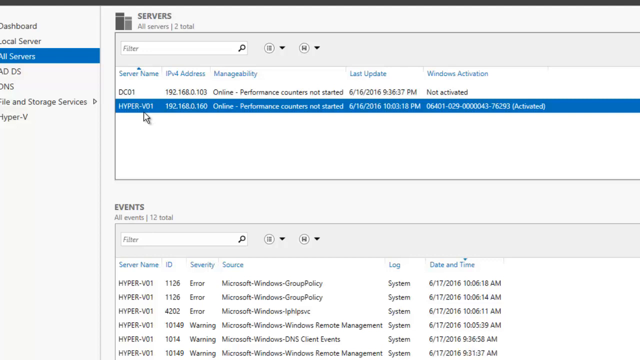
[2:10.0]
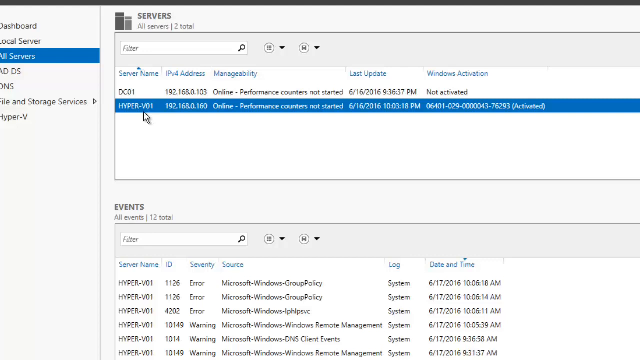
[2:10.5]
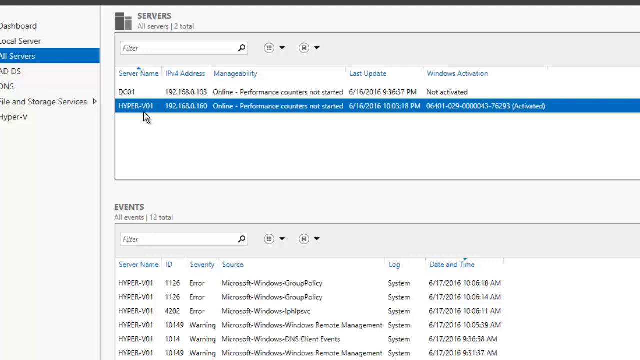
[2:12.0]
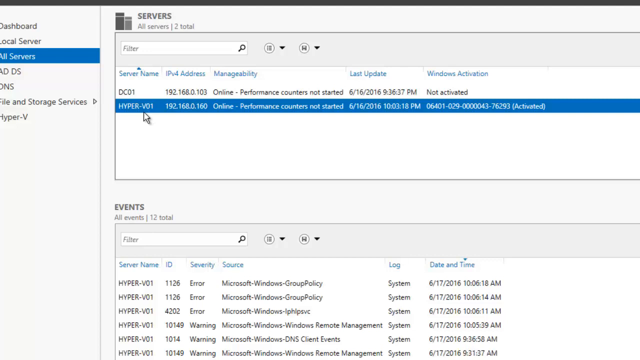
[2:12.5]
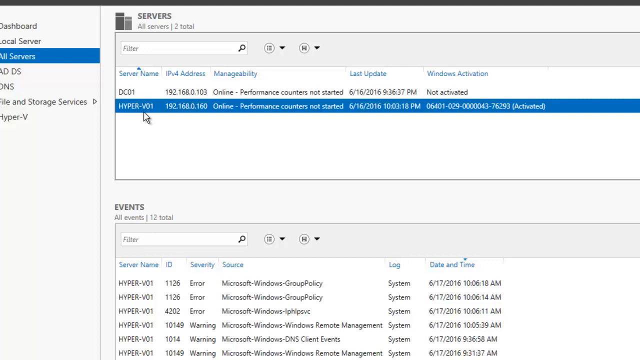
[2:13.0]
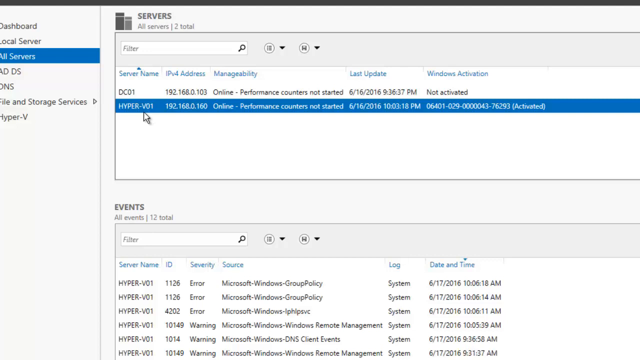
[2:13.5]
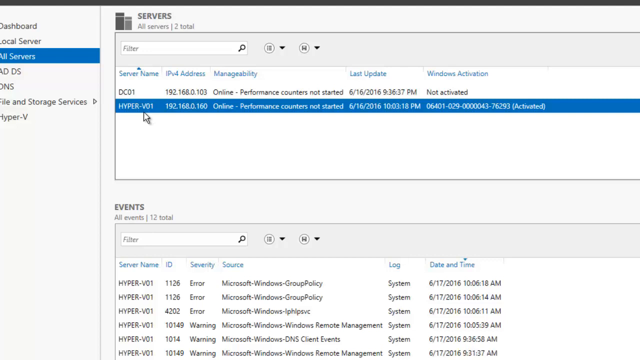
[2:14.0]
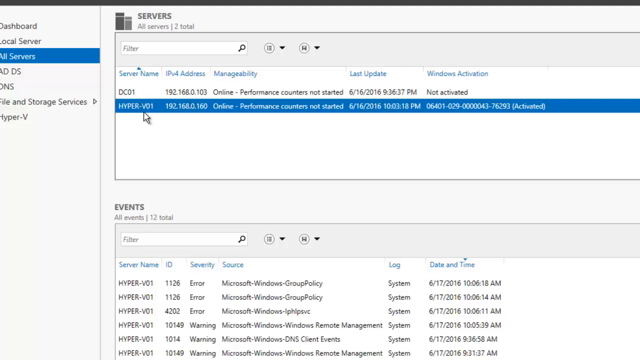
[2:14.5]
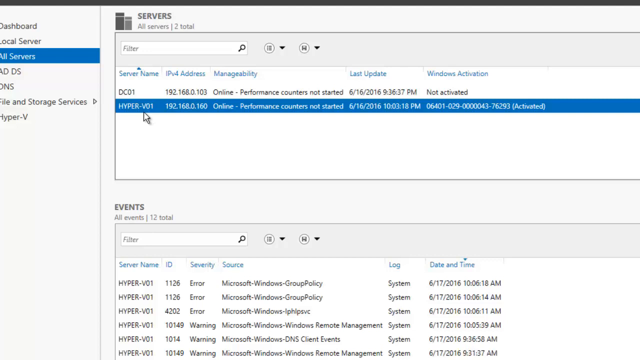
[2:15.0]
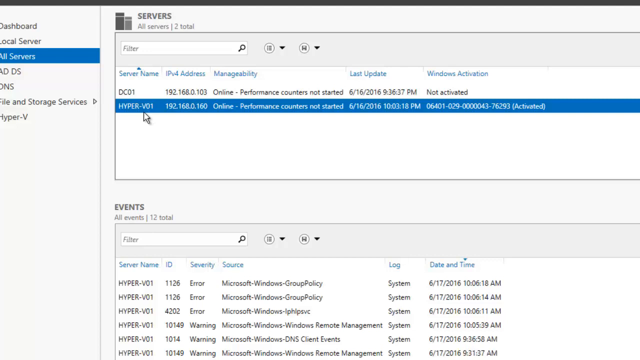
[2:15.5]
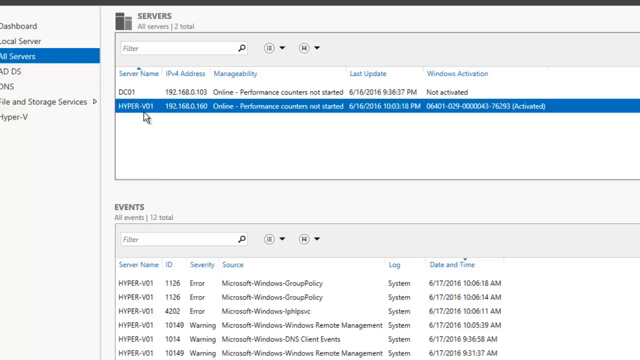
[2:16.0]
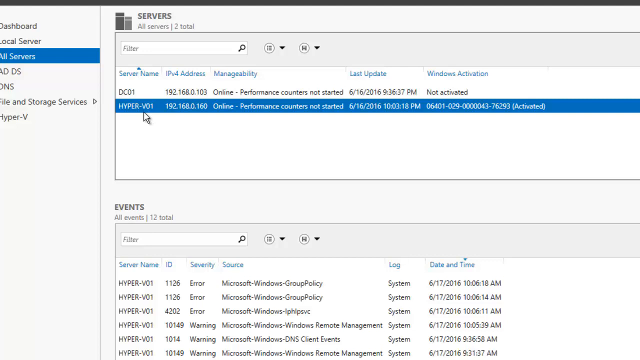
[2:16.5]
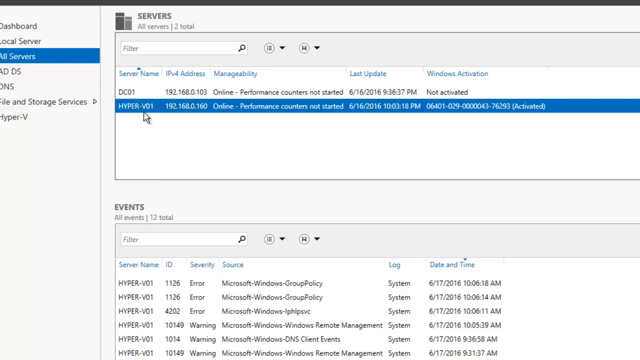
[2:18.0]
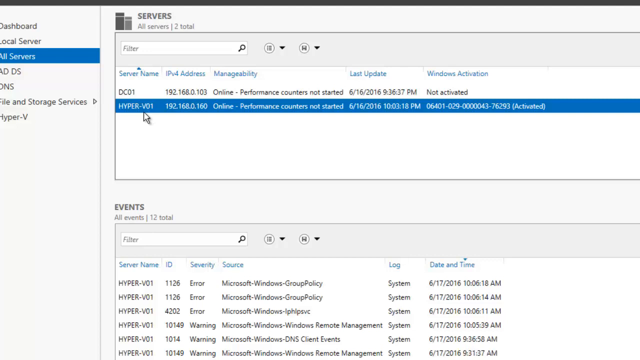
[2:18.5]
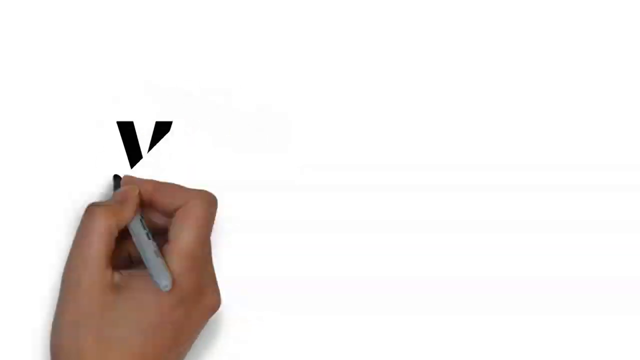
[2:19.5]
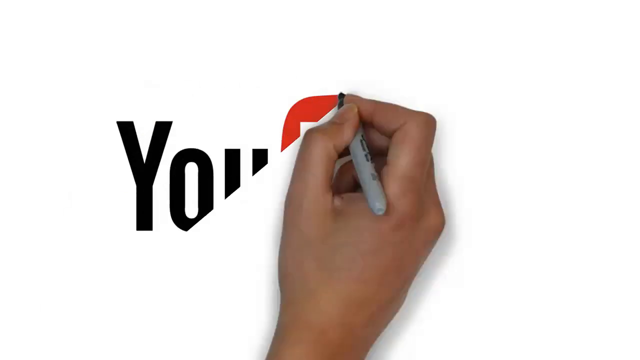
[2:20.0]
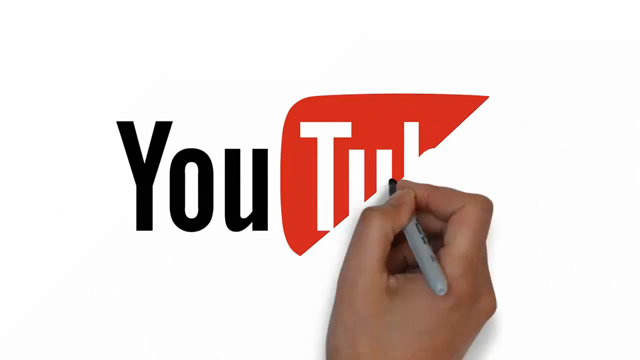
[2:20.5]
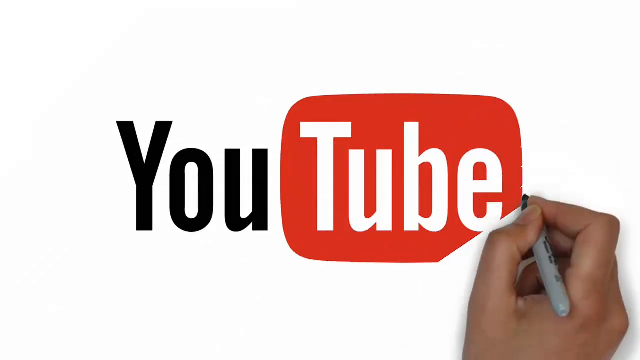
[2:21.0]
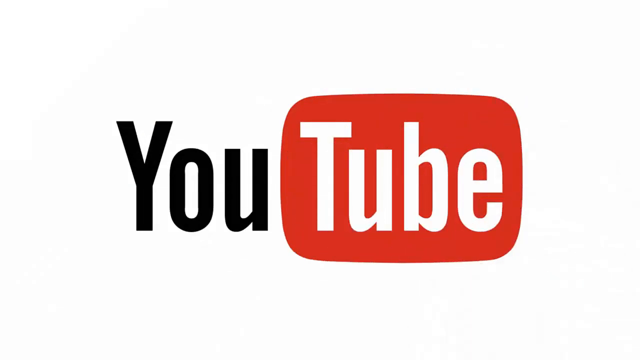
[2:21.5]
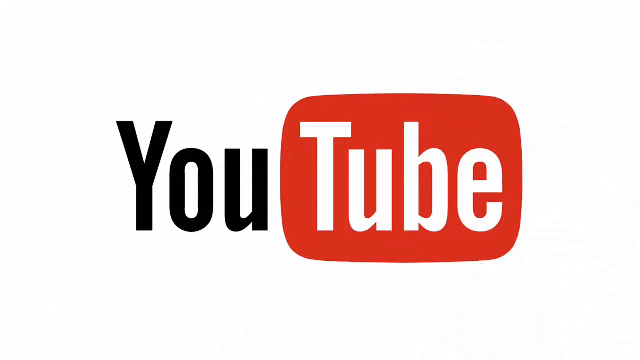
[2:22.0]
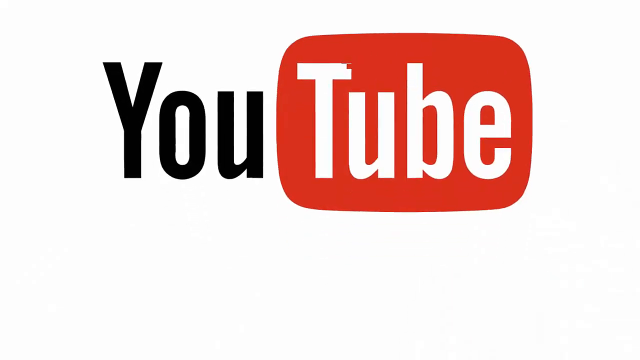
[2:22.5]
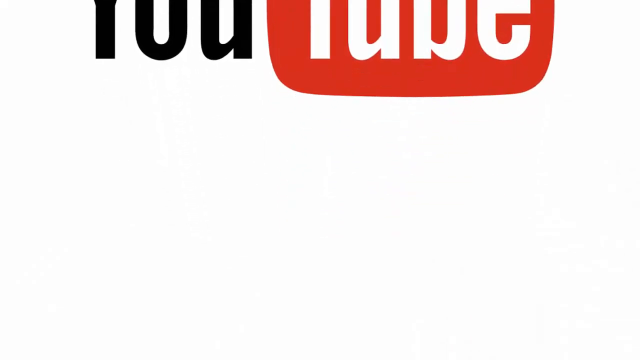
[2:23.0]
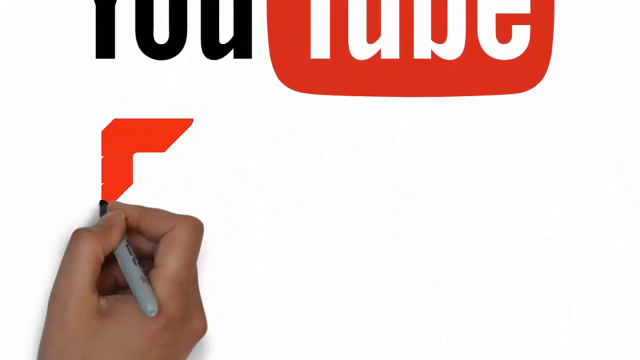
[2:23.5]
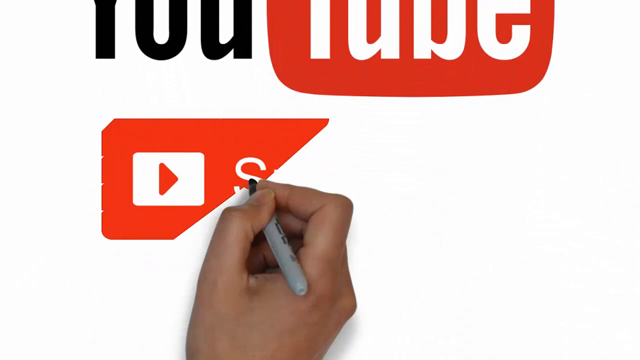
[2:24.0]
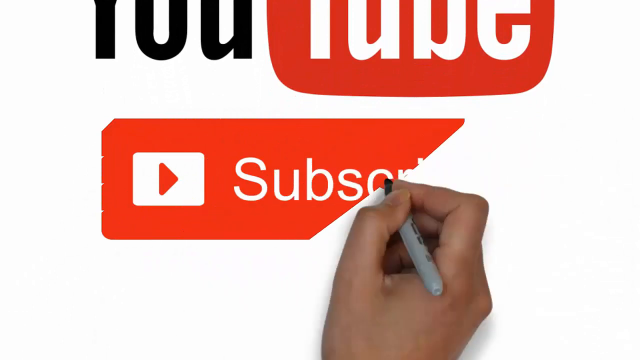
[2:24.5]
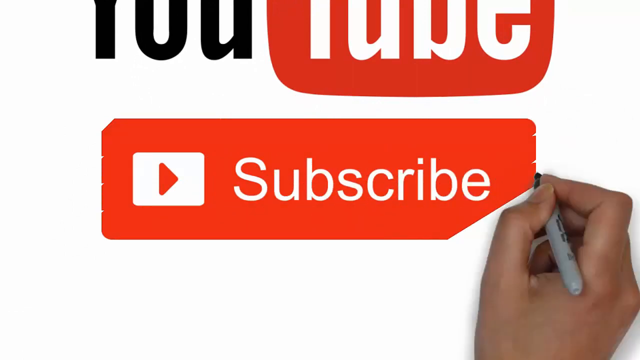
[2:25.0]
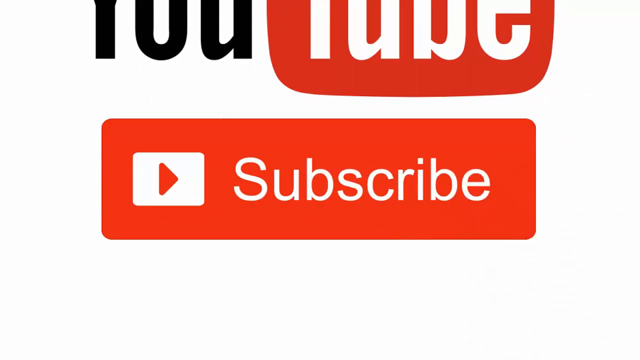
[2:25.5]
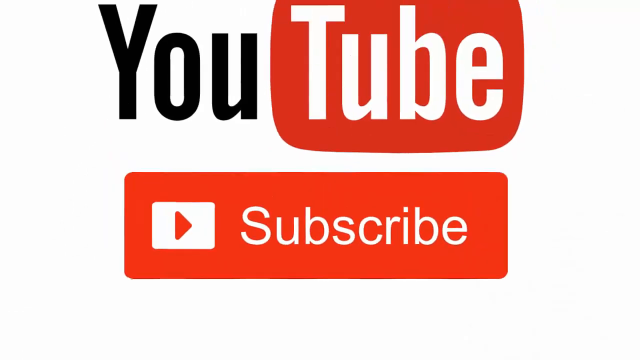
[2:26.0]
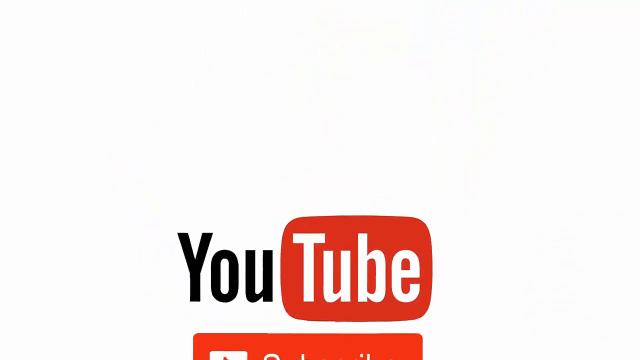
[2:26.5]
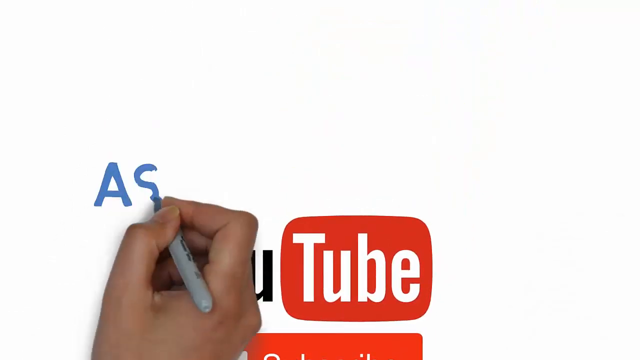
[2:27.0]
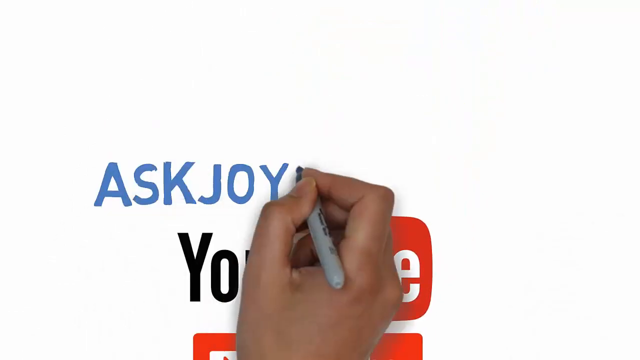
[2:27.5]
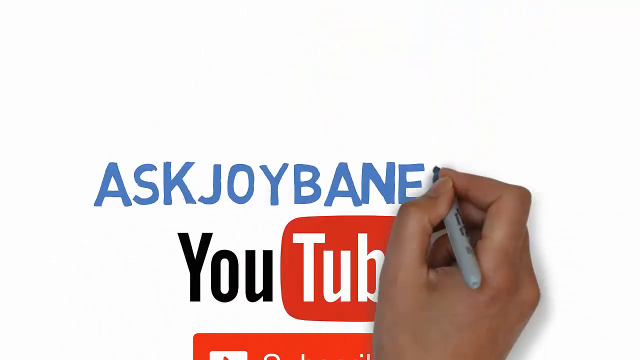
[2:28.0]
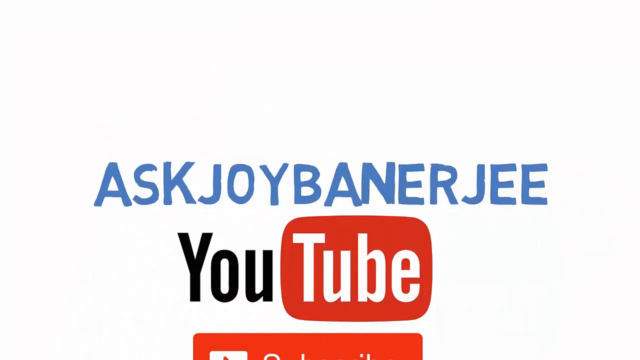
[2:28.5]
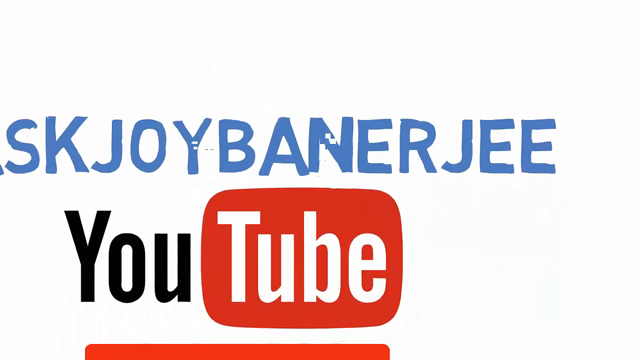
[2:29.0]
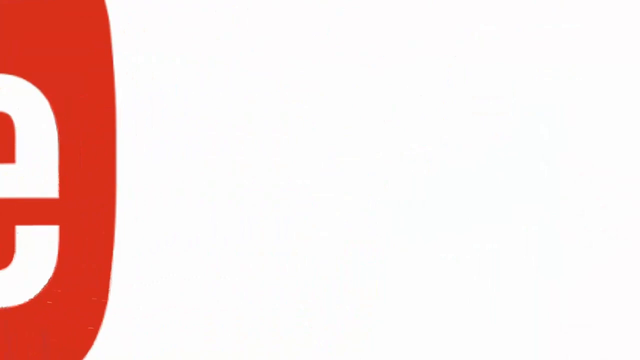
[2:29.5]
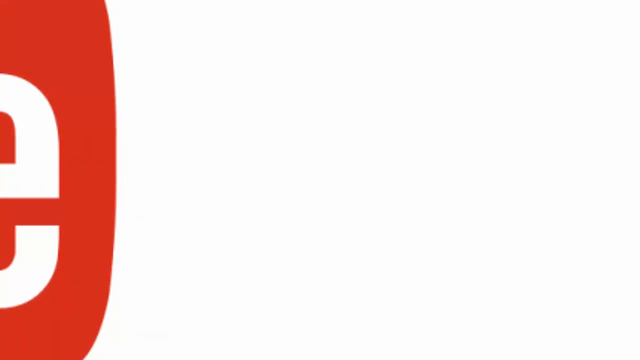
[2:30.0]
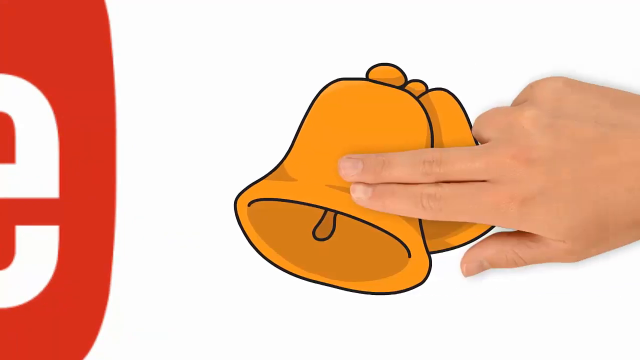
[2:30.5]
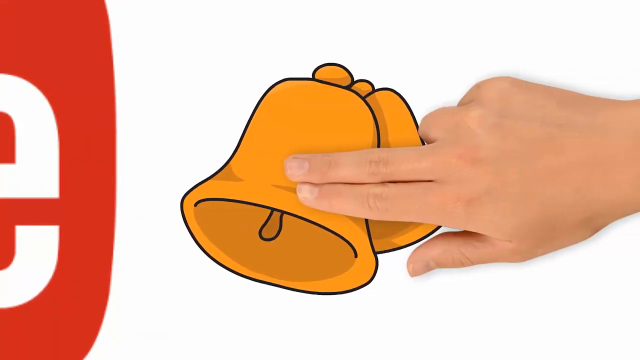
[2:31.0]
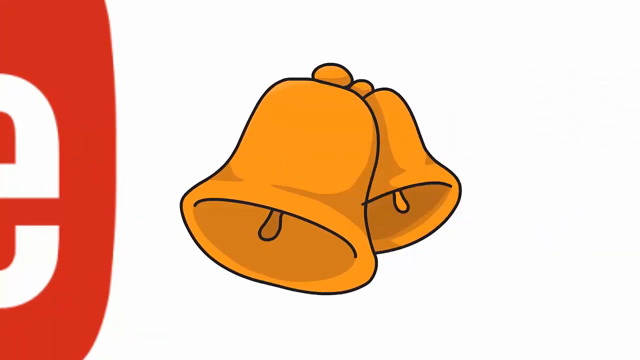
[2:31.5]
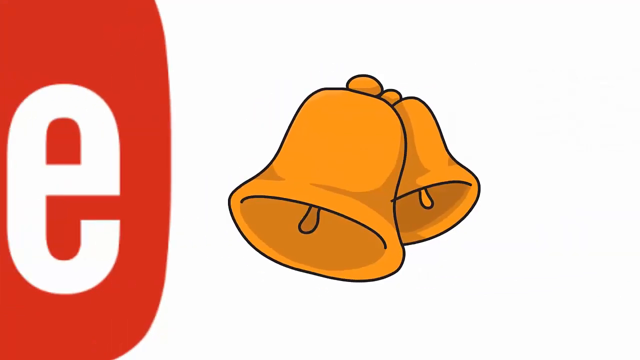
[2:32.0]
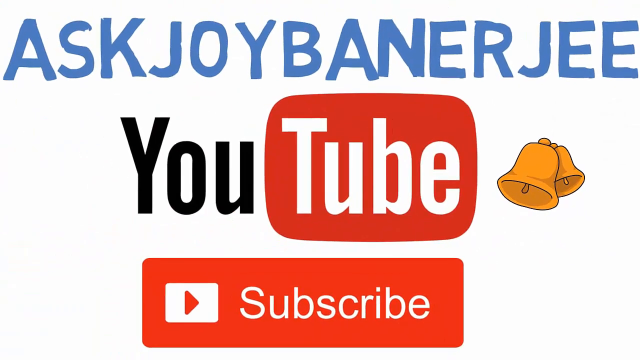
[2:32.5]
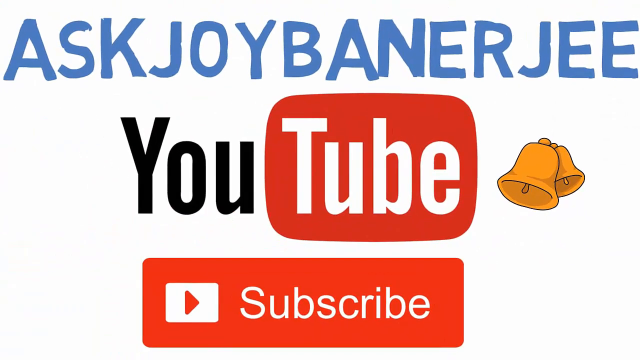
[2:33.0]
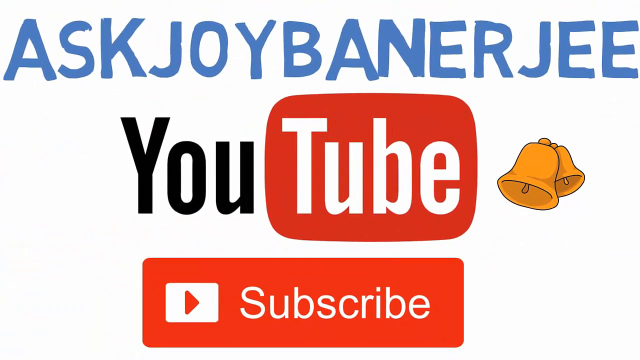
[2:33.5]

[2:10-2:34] The user is still in the servers section. On the left, the All Servers menu item is selected. To the right, under Servers, the Hyper-V01 server is selected and highlighted in blue. The column headings at the top are Server Name, IPv4 Address, Manageability, Last Update, and Windows Activation, and under Windows Activation the Hyper-V01 server shows as activated. Beneath that, under Events, all of the events for this server are listed. The video ends with a hand that looks like it is drawing the YouTube logo onto the page; the hand then draws a red Subscribe button for YouTube and writes the name of the YouTube channel, "AskJoyBanerJee."